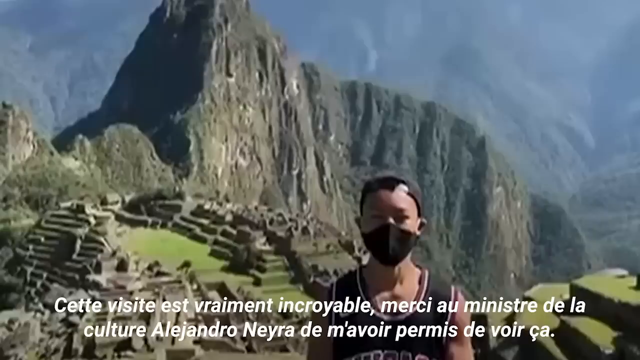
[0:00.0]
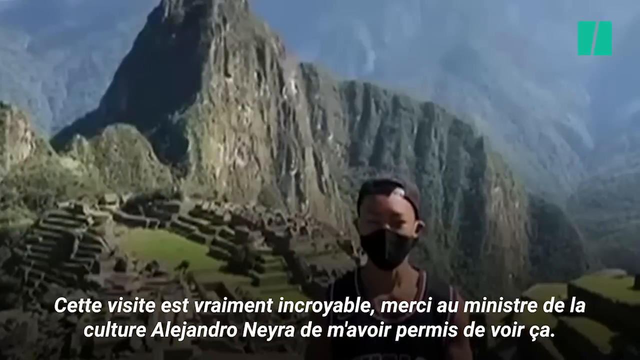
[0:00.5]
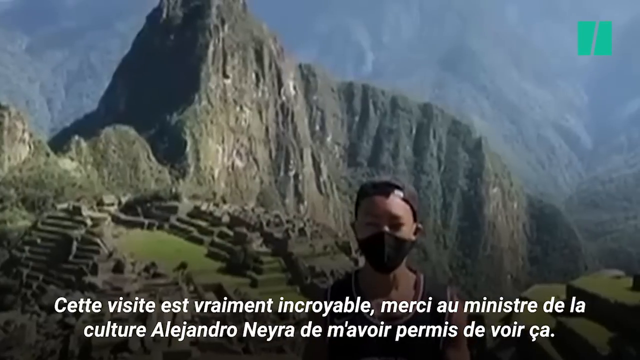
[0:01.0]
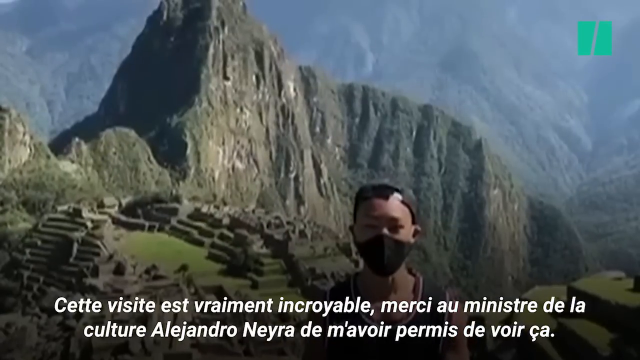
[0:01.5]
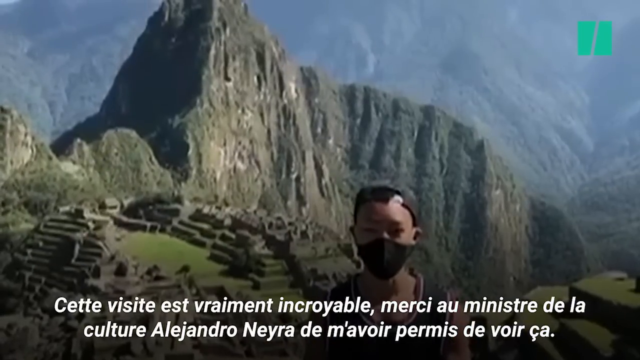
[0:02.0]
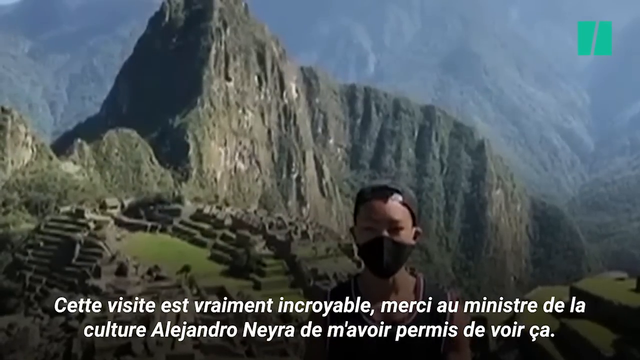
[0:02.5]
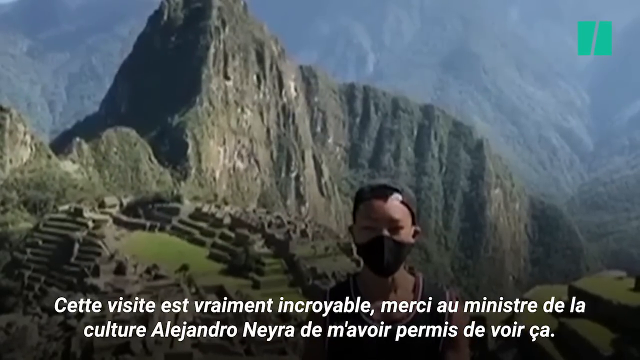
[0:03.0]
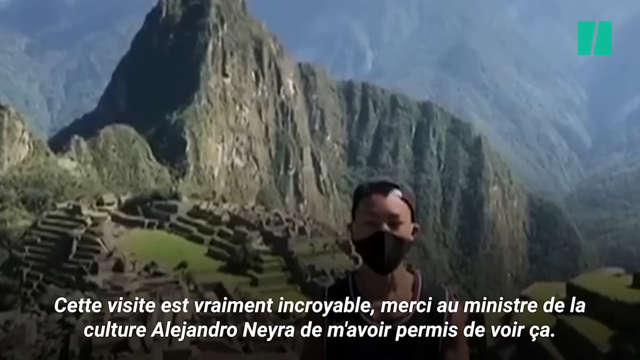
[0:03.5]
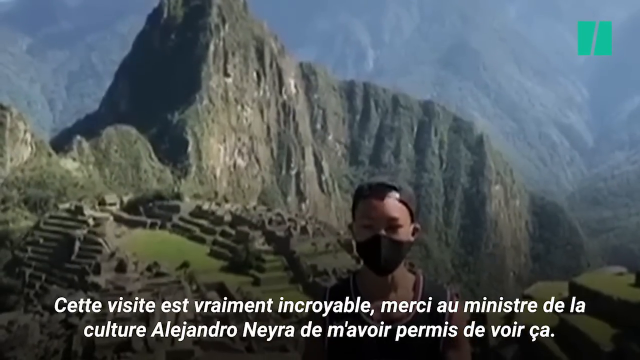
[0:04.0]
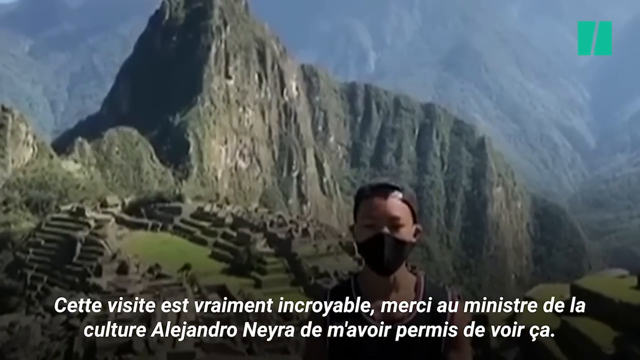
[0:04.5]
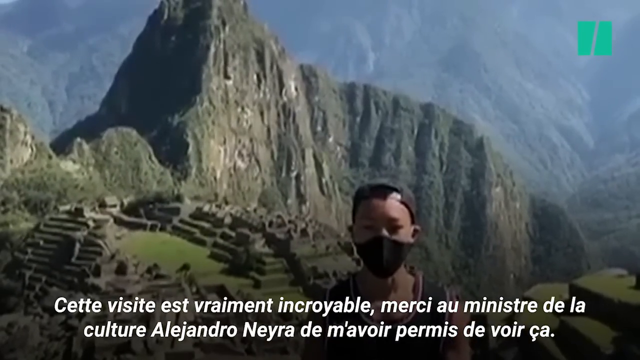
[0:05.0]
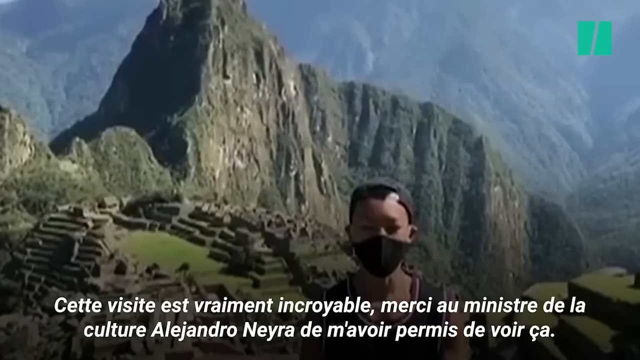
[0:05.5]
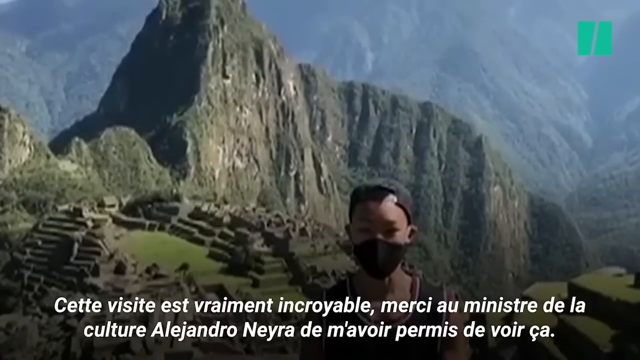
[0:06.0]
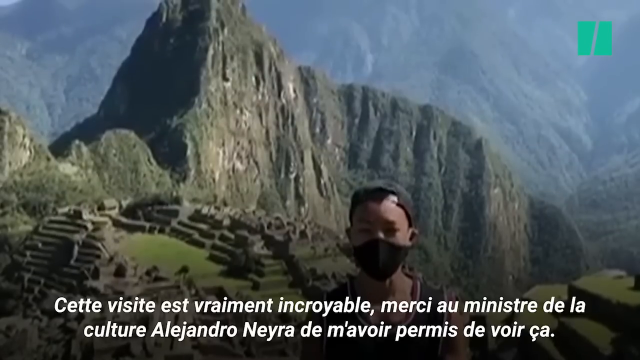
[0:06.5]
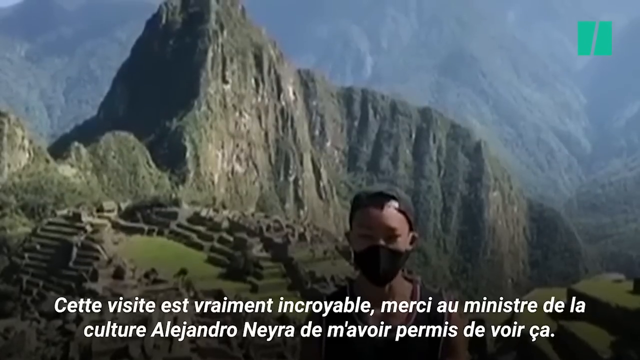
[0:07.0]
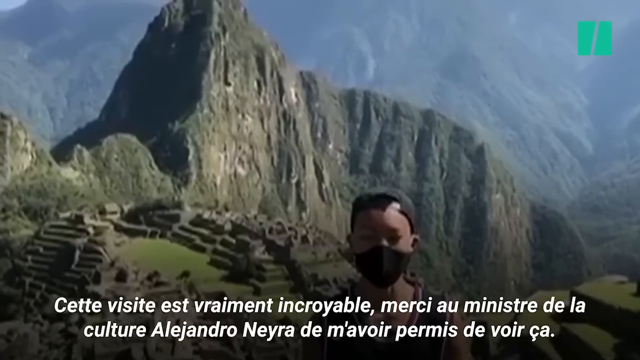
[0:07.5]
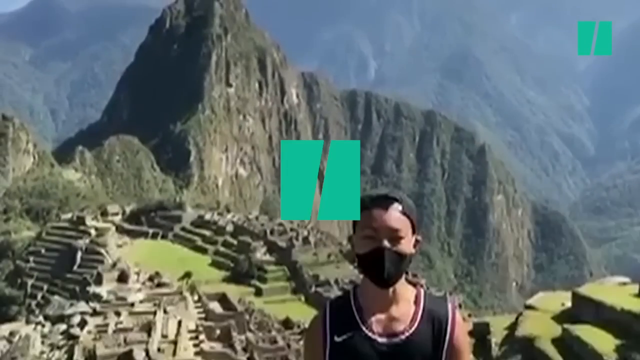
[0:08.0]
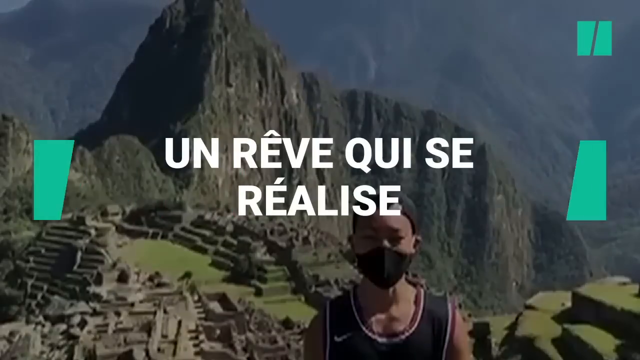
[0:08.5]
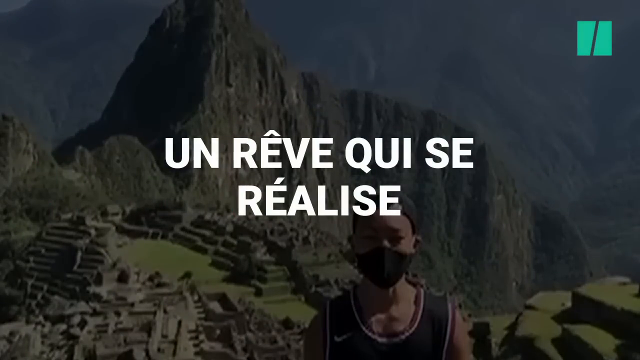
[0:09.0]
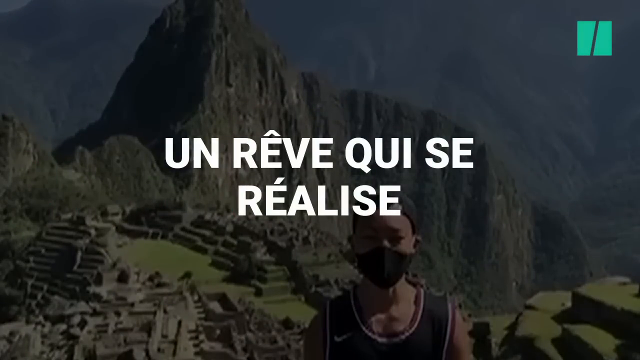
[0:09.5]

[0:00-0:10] A man wearing a mask, a black hat and a red shirt talks to the camera. Behind him is a mountainous area, with many mountains far in the distance covered by fog, so he is very high up in the mountains. A small patch of grass is visible. Text in a language other than English, possibly French, mentions something like Alejandro.